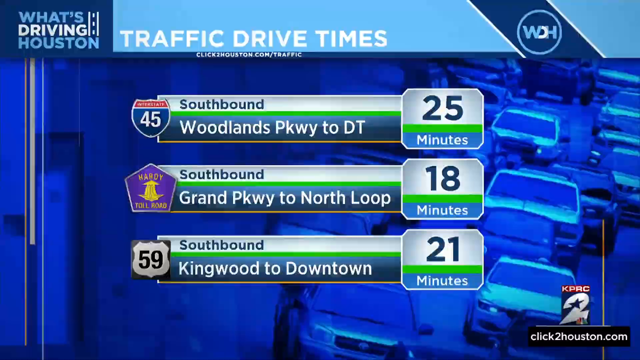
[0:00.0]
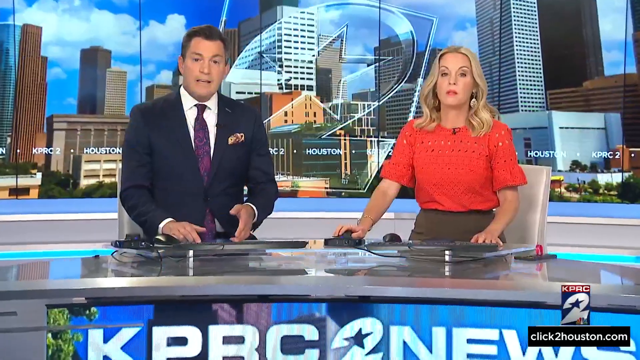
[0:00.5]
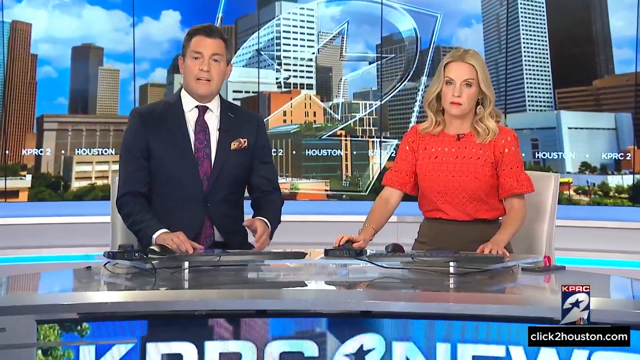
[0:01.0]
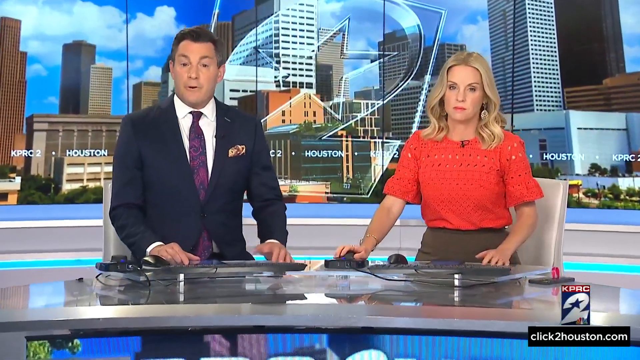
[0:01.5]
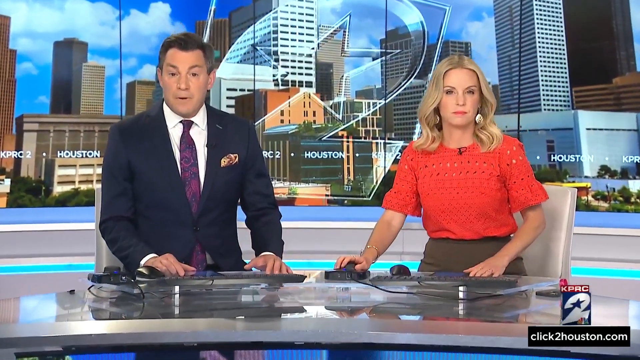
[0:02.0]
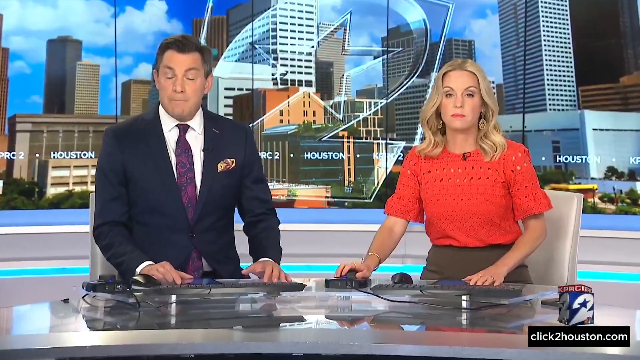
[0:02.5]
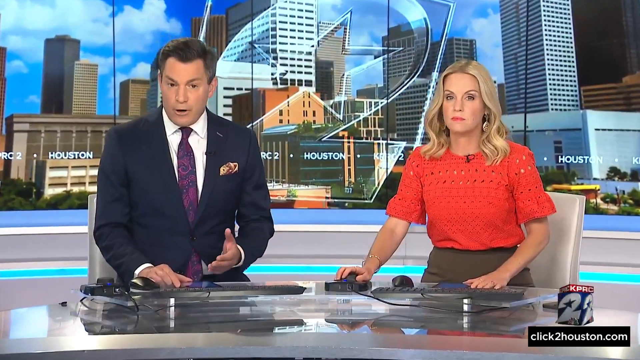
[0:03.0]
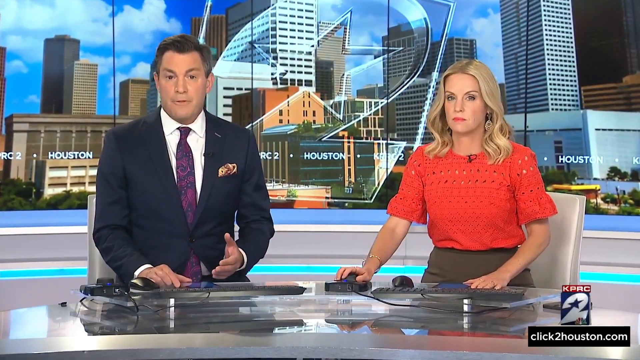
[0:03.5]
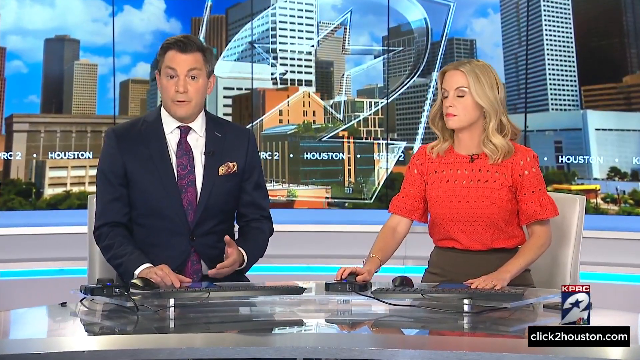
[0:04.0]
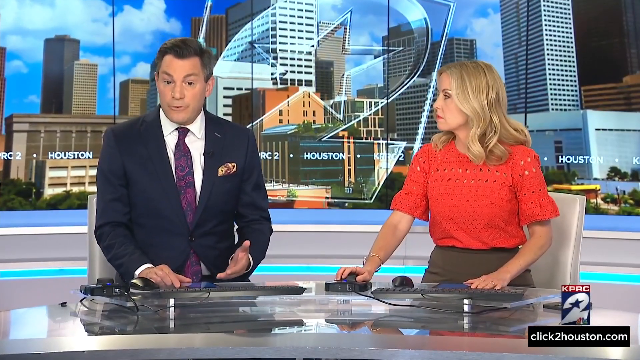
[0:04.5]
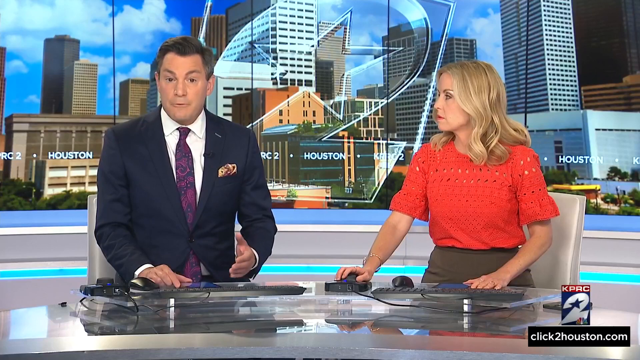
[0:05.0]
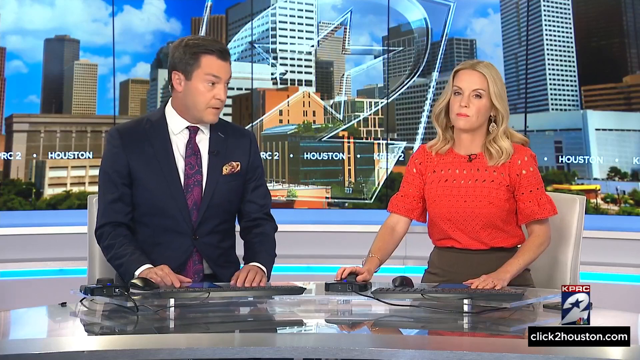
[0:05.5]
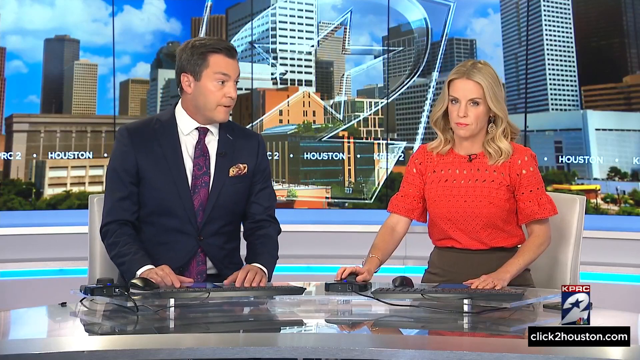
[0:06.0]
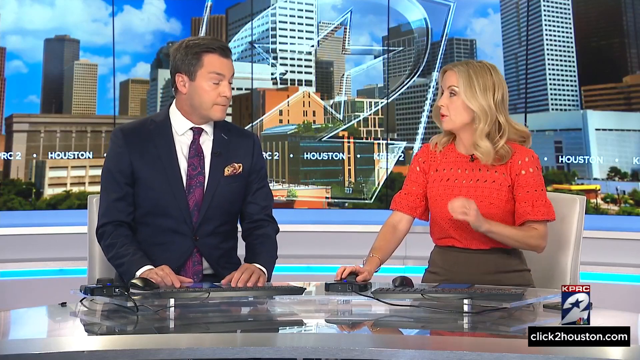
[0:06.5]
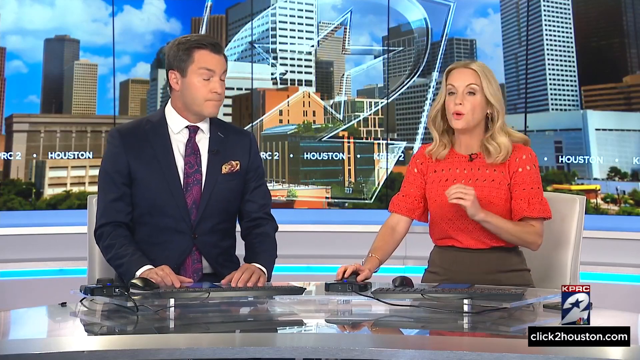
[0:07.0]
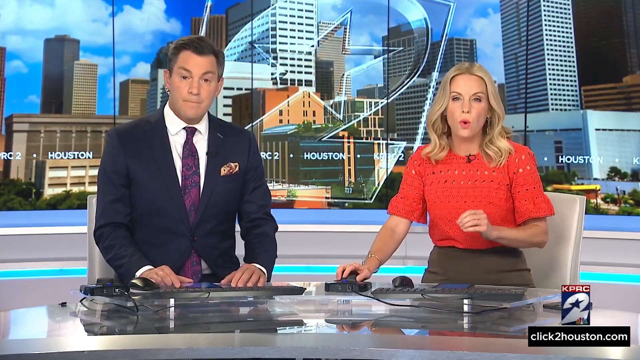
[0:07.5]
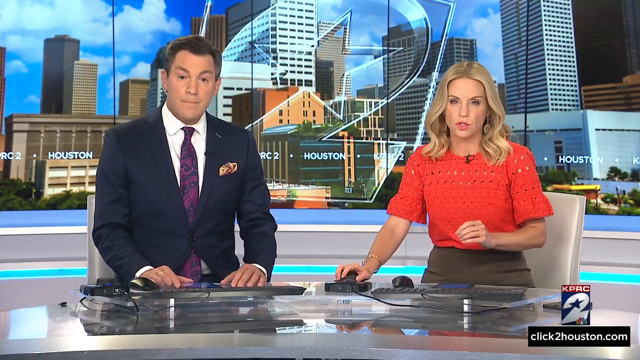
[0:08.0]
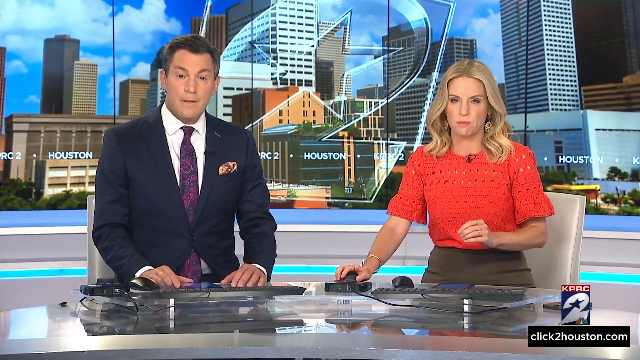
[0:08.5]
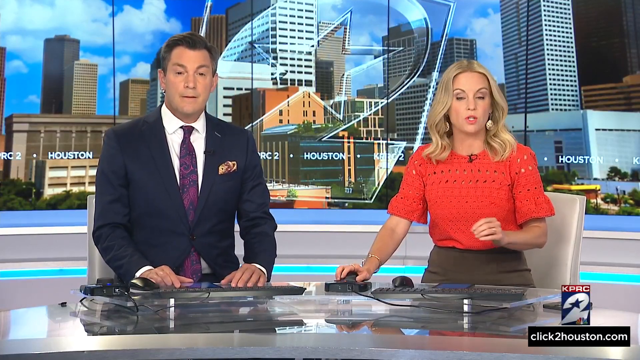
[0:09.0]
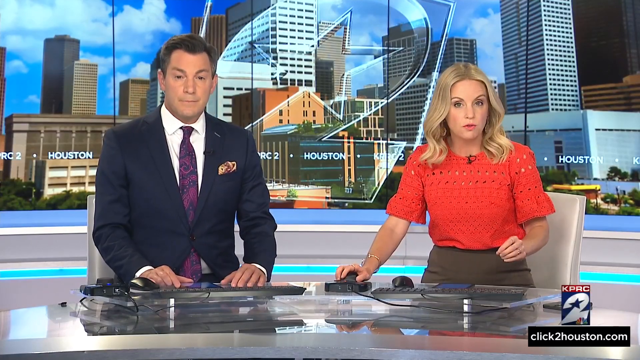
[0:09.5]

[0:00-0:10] The video opens on two newscasters, a man seated on the left and a woman seated on the right, both behind a glass desk inside a television studio. In the background is a large transparent 2 with a star in the center. On the bottom right it says "KPRC 2", followed by a web address ending in .com. The background shows what looks like downtown Houston during the daytime, with blue skies and white fluffy clouds, and "Houston, KPRC 2" runs across the center of the background.